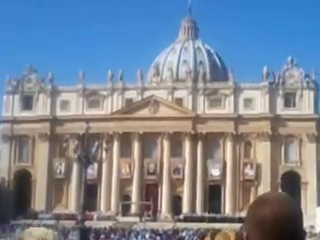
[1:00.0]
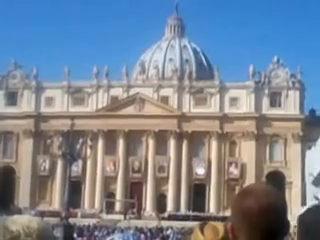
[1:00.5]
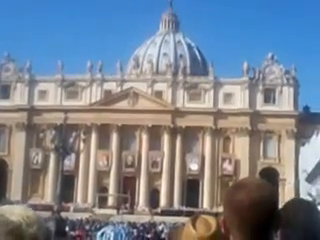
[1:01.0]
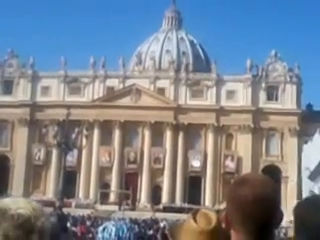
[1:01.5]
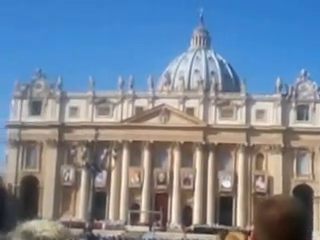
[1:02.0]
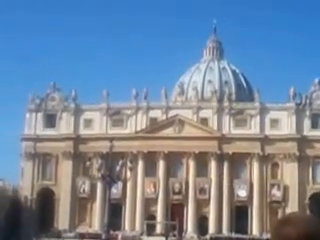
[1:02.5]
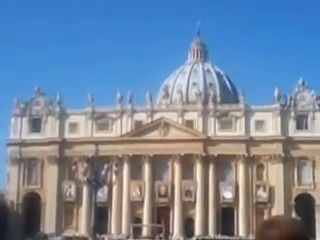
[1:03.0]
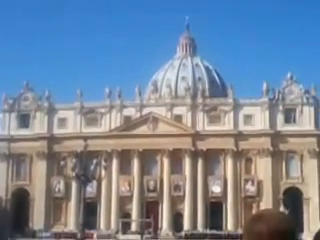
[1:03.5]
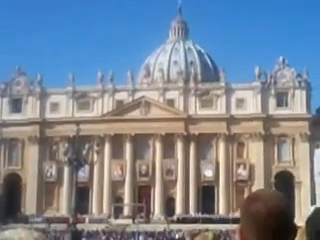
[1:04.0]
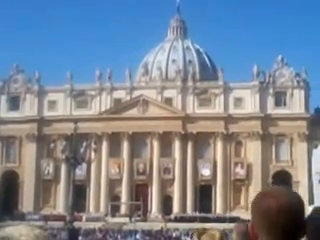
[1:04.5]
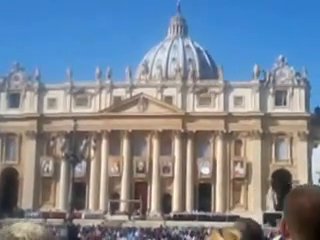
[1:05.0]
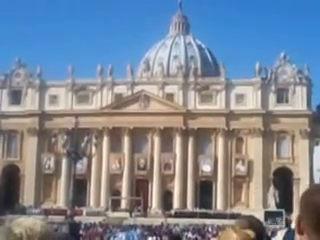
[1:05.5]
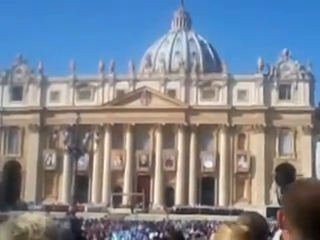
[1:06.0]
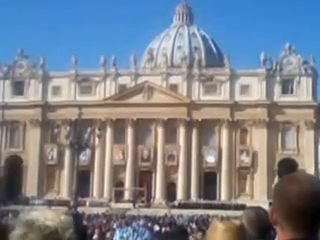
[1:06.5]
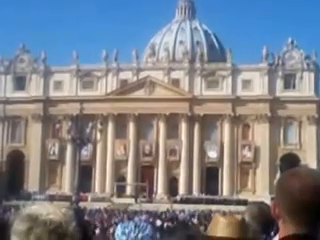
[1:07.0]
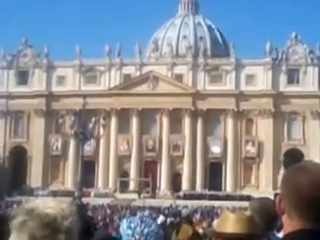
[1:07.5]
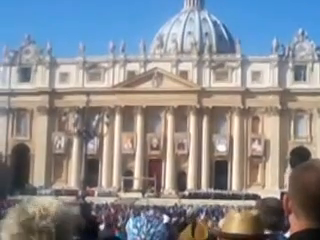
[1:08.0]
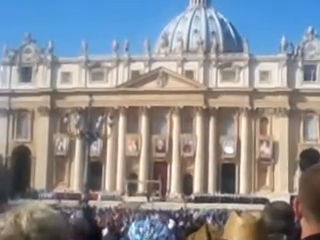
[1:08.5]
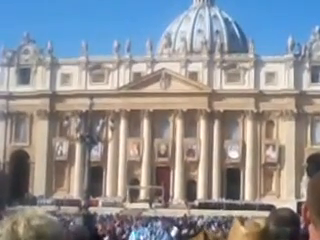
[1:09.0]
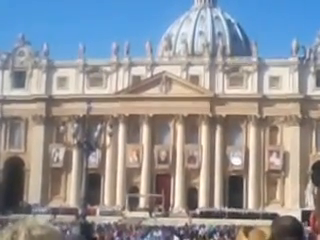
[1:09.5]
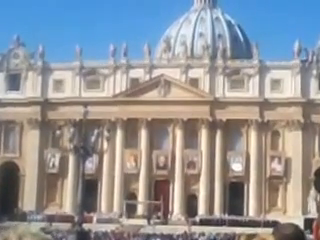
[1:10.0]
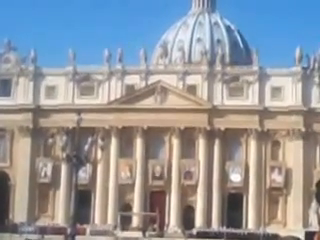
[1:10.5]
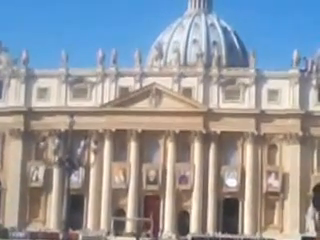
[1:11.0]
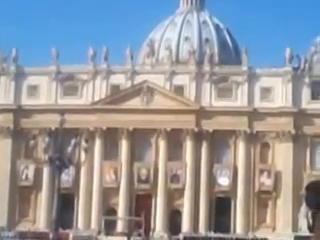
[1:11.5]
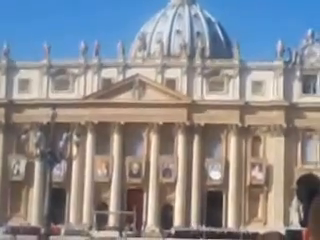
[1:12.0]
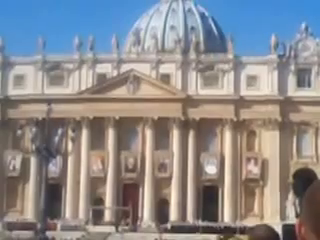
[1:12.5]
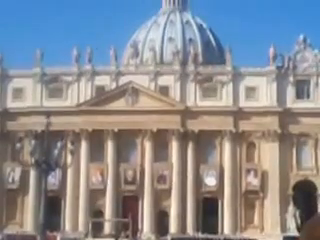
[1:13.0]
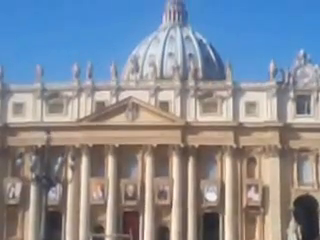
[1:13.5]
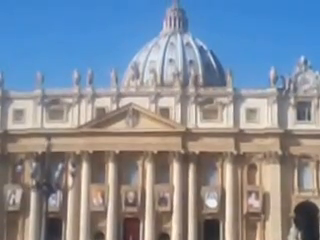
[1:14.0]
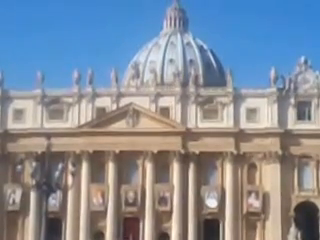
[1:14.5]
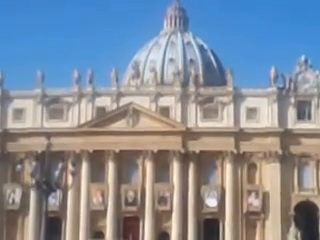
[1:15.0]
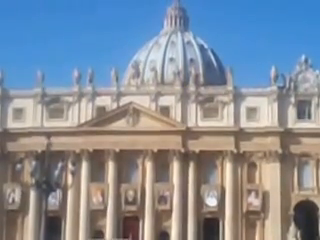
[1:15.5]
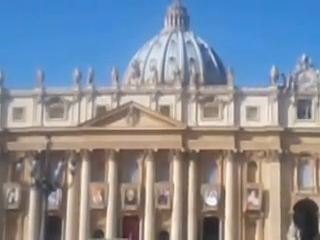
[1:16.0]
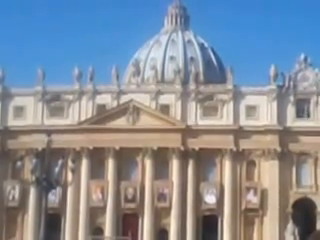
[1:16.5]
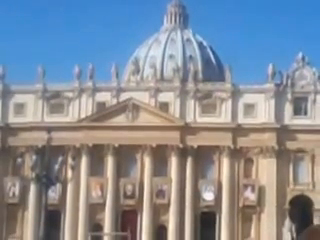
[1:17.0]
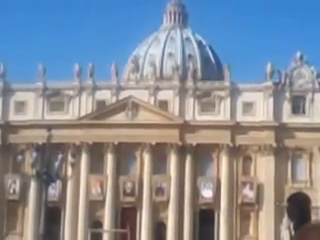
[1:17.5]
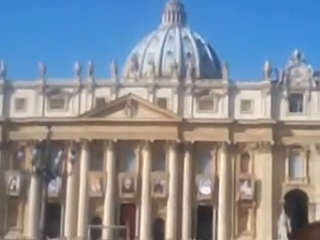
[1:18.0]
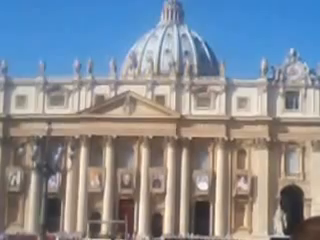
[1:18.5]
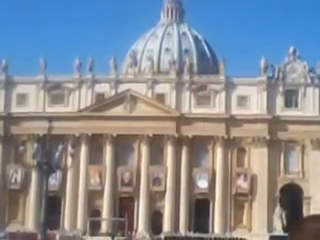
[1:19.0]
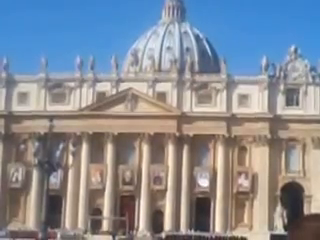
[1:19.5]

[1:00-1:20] A very large crowd stands in front of St. Peter's Basilica in Vatican City, Rome, Italy. The person filming takes a closer view of the center of the building, showing the stone facade and the dome, which is possibly covered in bronze and has a figure on top; the video quality makes it difficult to see. The person spends quite some time filming the front of the building while all the people quietly stand, waiting for whatever may come out of the building. A very decorative lamp post stands in the middle of the people in front of the person filming. The sky remains cloudless.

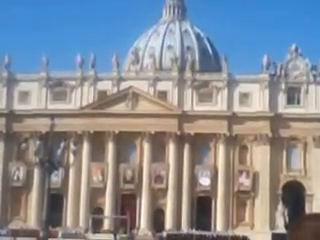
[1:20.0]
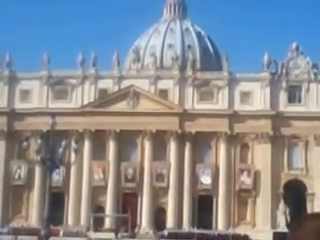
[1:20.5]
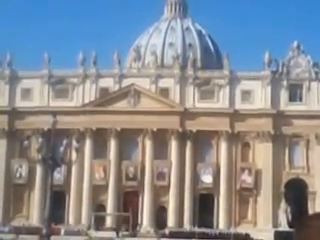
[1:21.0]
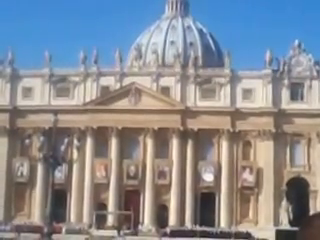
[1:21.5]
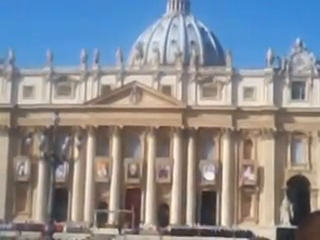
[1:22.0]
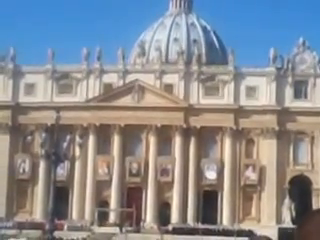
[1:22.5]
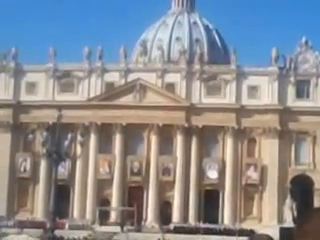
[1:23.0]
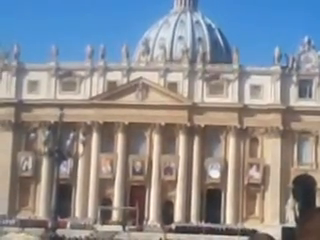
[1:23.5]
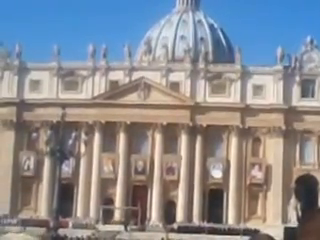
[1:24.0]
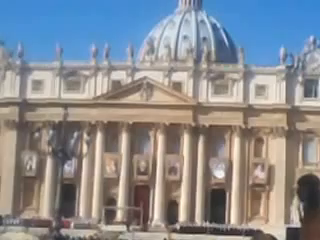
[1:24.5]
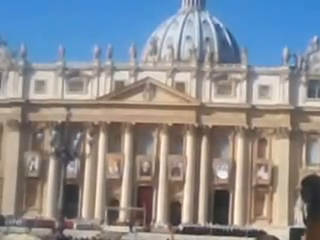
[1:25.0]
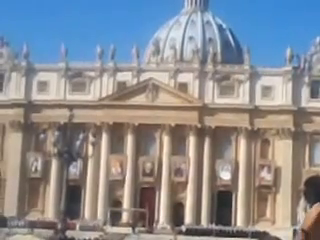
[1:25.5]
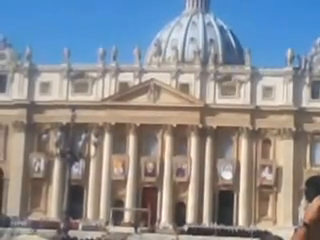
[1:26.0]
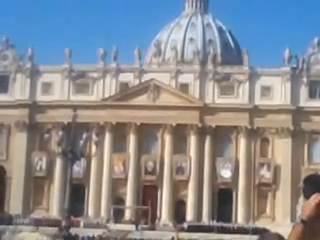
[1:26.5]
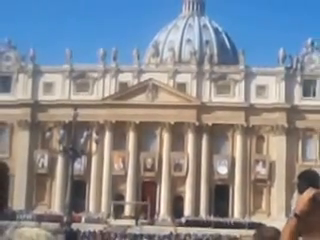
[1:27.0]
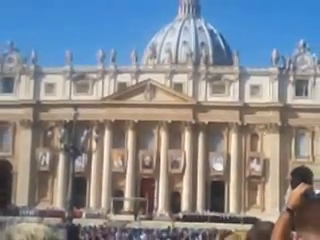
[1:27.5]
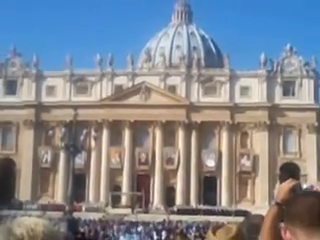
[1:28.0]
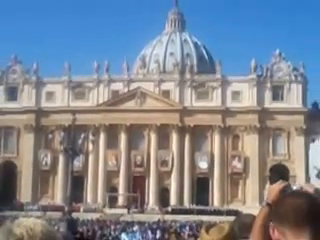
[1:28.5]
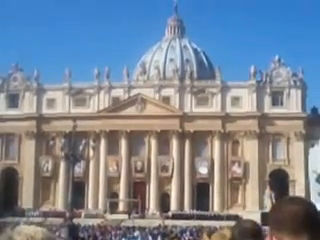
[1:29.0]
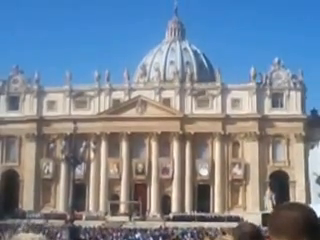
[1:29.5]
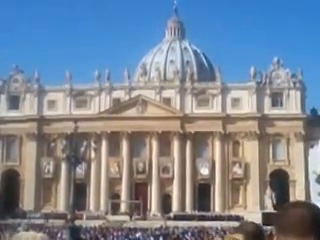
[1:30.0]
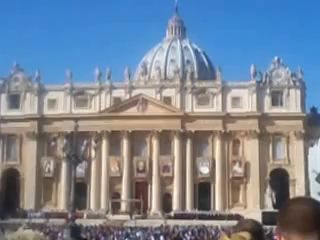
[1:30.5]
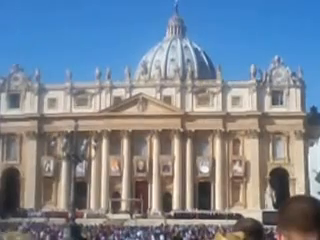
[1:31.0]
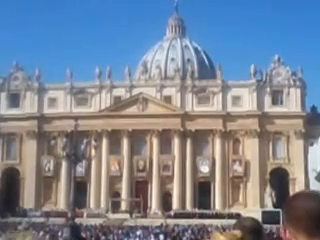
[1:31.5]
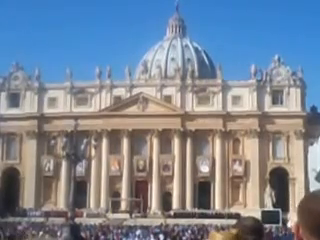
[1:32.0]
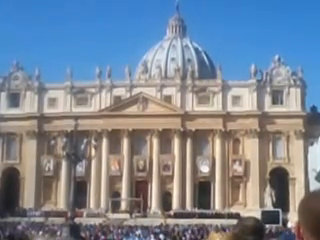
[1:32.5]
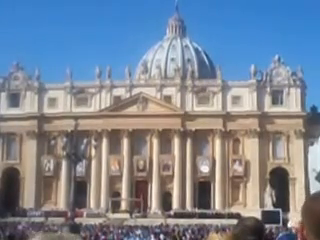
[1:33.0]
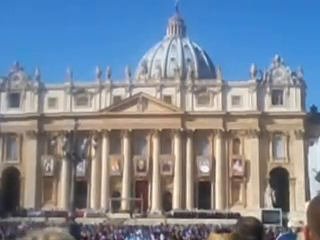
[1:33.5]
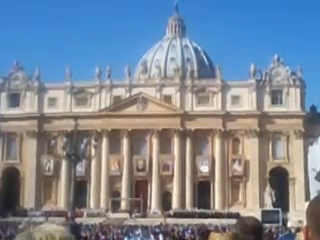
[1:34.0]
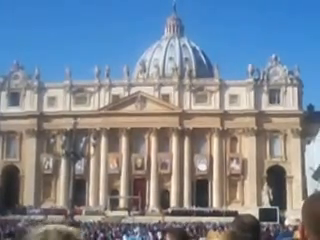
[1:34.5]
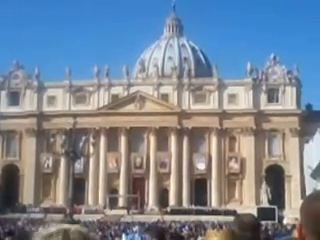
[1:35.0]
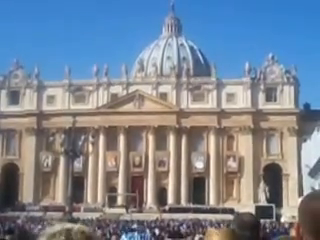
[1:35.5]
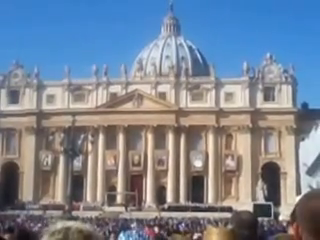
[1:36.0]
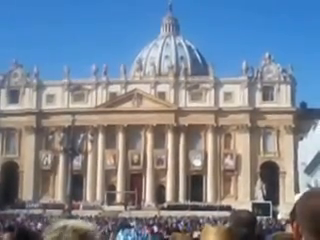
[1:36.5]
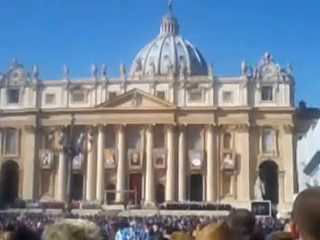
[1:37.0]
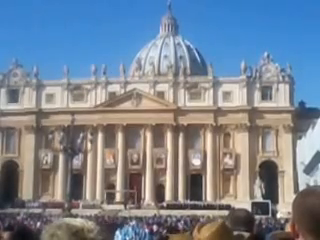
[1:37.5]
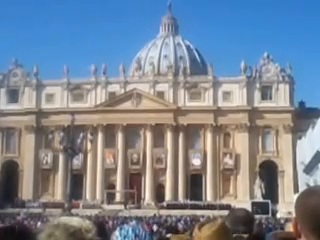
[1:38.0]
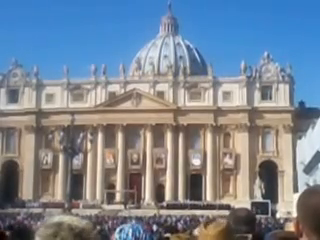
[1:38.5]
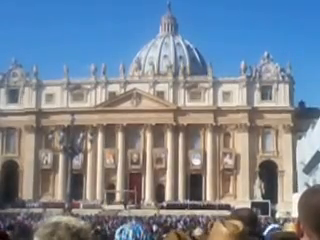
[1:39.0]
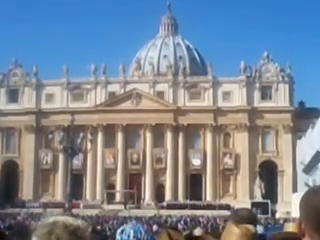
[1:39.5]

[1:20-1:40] The front of St. Peter's Basilica is shown in the centre of Vatican City, at the front of the Vatican Square, which is surrounded by columns of cream stone. A huge crowd is still in front of the building, waiting for something to happen or appear. The ornate lamppost is visible in the centre of the square in front of the person filming, surrounded by people. A stone portico is over the pillars at the main entrance. Many features are difficult to make out given the video quality. The sky is very blue and cloudless.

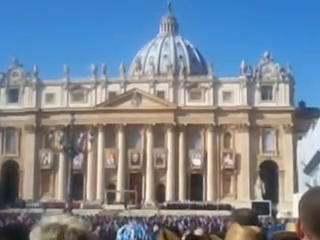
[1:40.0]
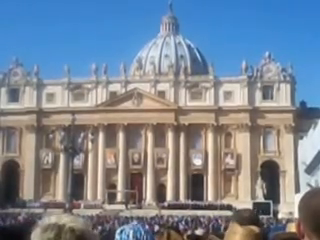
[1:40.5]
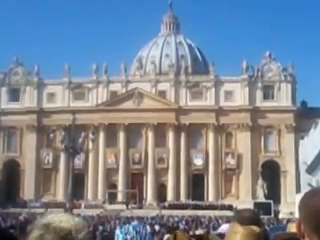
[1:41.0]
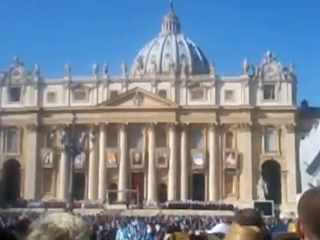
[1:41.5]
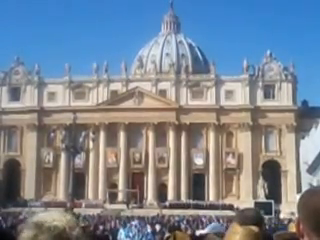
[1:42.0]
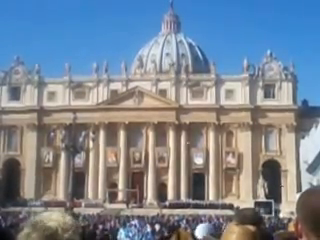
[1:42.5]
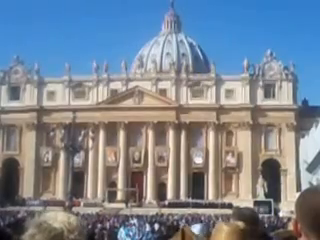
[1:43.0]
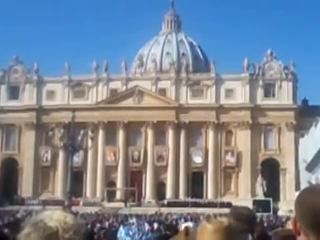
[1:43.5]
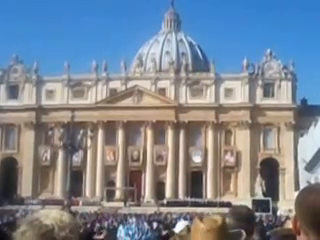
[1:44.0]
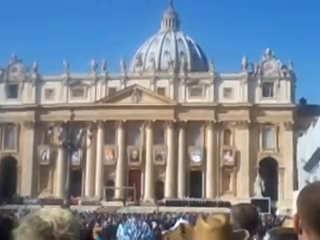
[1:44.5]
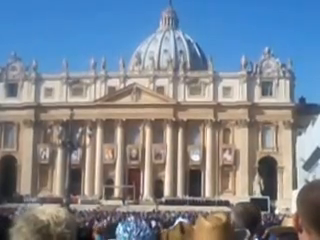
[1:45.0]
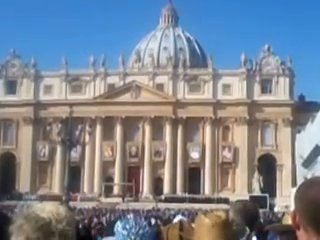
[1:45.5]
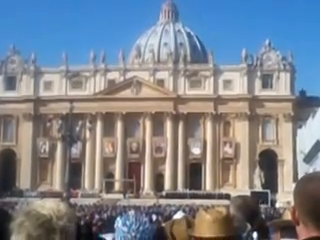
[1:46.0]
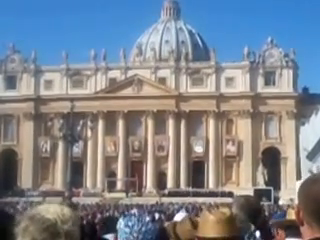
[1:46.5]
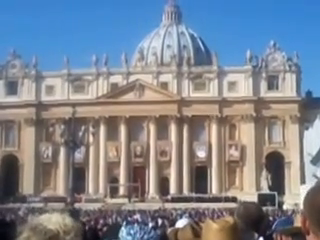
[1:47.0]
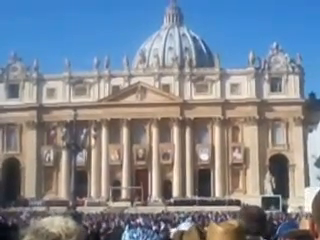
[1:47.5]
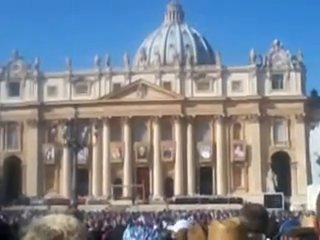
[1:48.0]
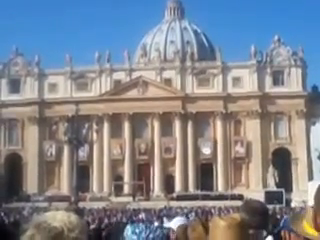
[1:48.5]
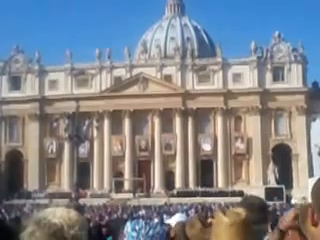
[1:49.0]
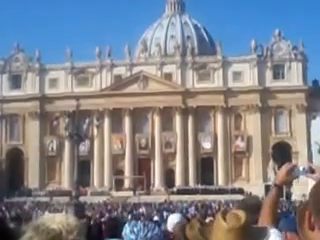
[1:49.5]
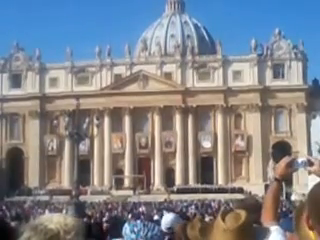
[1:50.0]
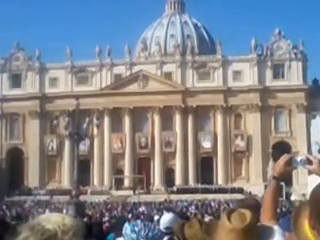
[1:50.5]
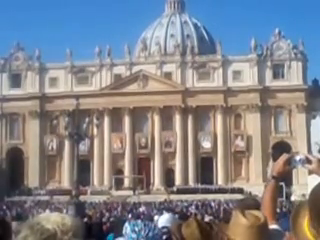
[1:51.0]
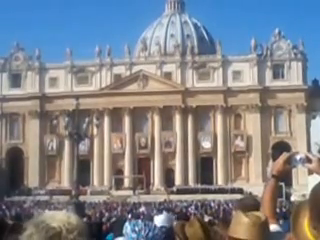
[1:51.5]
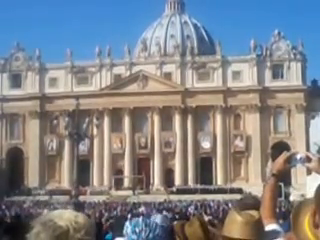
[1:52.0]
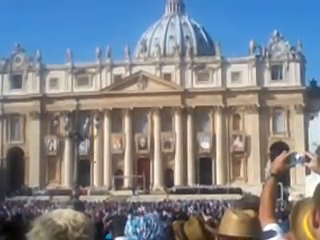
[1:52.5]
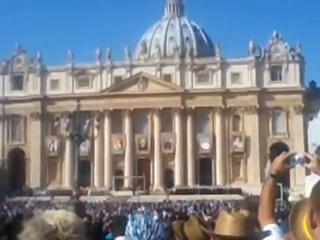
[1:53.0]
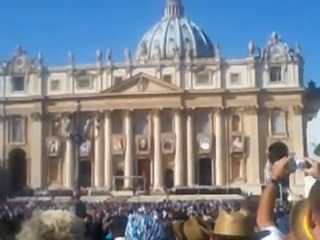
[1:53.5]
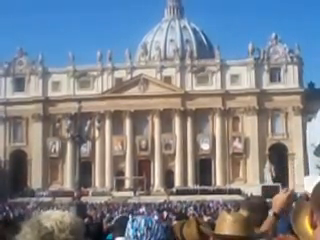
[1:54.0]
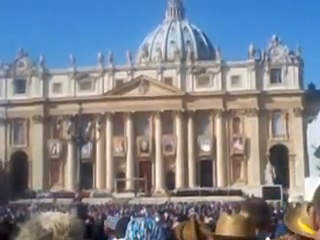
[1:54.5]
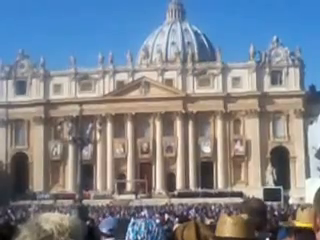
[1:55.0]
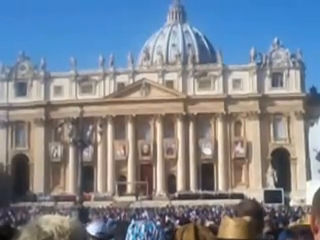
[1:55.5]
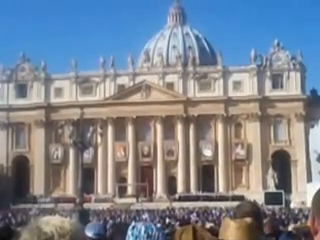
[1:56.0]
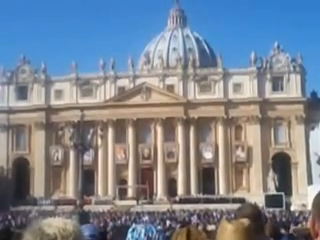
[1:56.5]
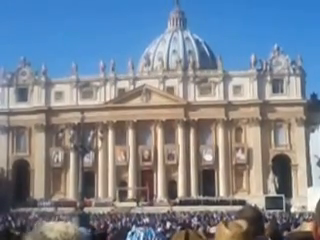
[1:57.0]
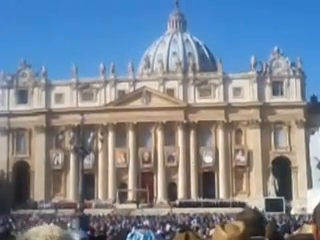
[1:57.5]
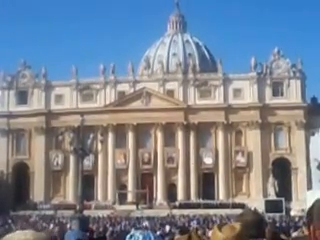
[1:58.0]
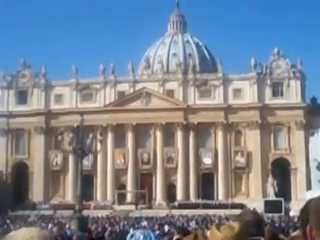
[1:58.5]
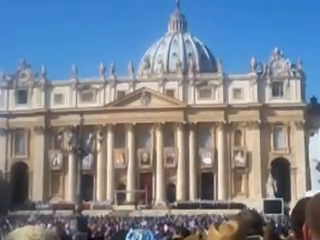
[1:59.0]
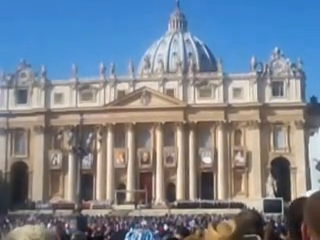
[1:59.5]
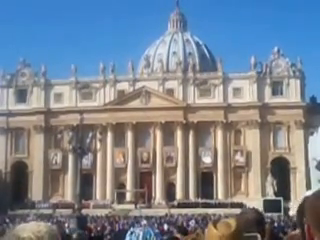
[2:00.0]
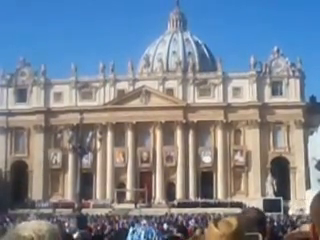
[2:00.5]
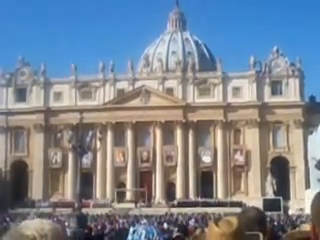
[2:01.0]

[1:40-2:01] A person standing in a large crowd films the front of St. Peter's Basilica in Vatican City, Rome, Italy, recording a major event. A huge crowd is in front of the person filming. The building is made of cream stone with many central pillars; at least seven pillars are visible in the front façade, along with many statues. Hundreds of thousands of people fill the centre square, and some are getting ready to film or are already filming the event. There appear to be many doors at the front of the building. The sky is clear, blue and cloudless.